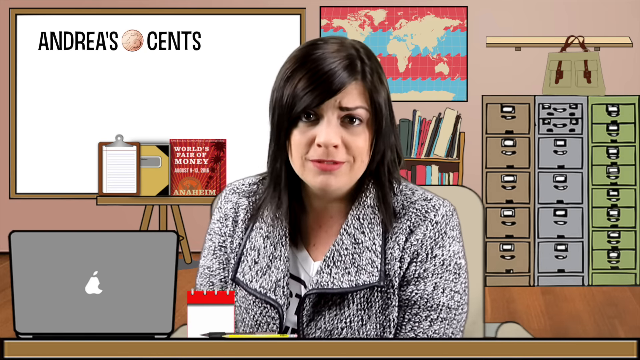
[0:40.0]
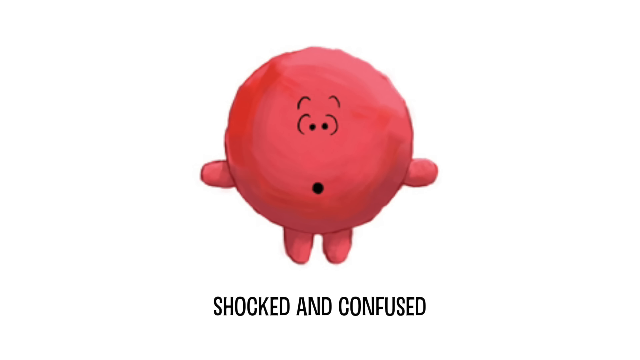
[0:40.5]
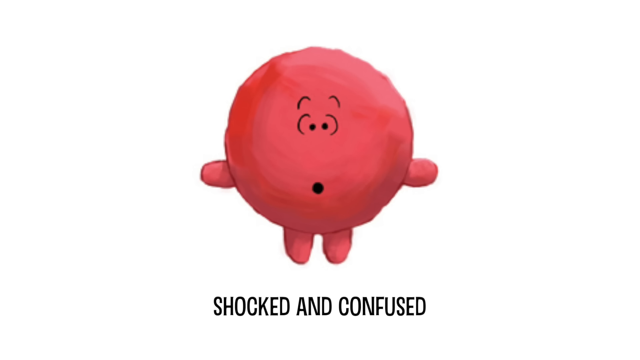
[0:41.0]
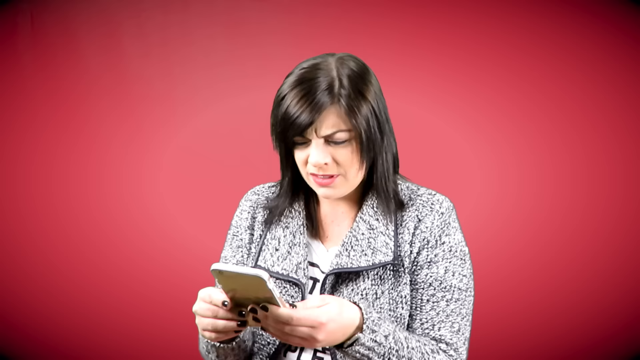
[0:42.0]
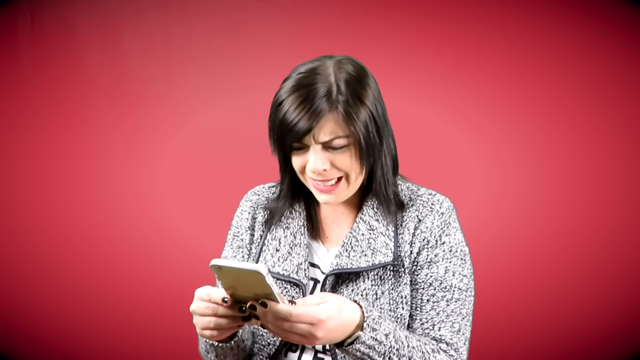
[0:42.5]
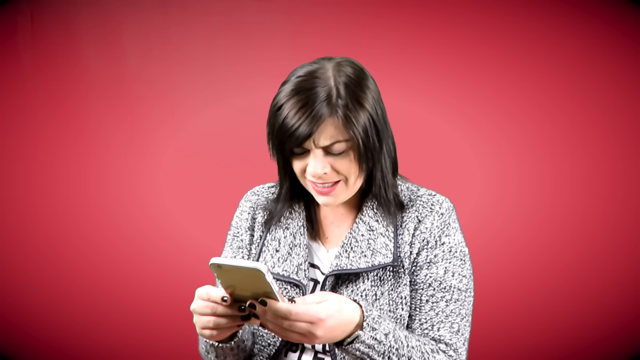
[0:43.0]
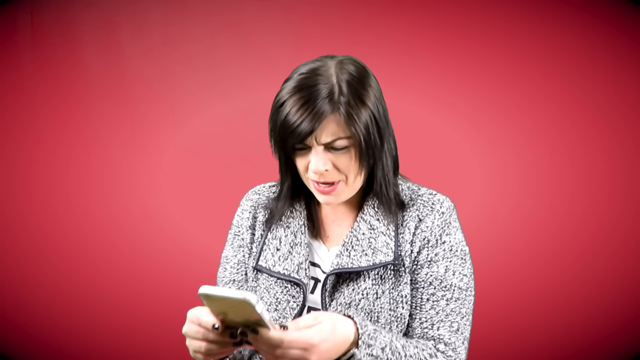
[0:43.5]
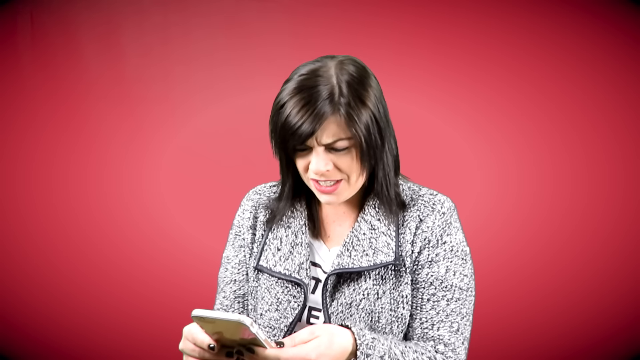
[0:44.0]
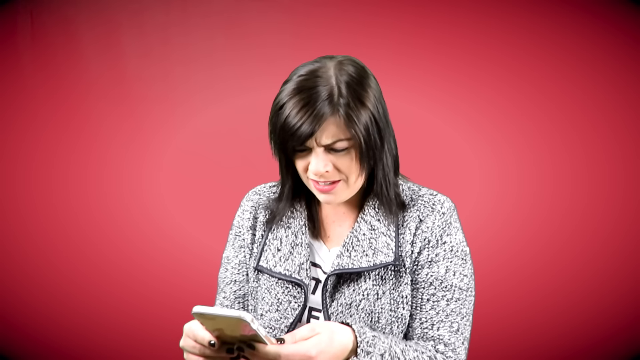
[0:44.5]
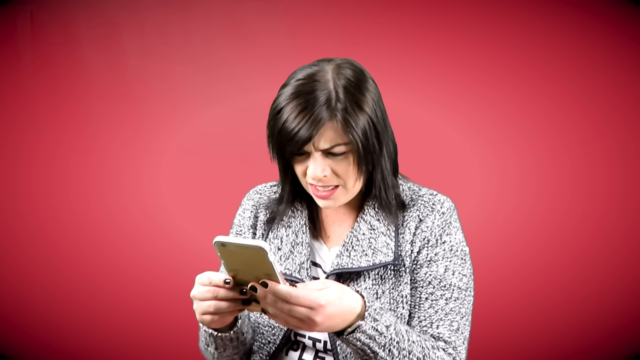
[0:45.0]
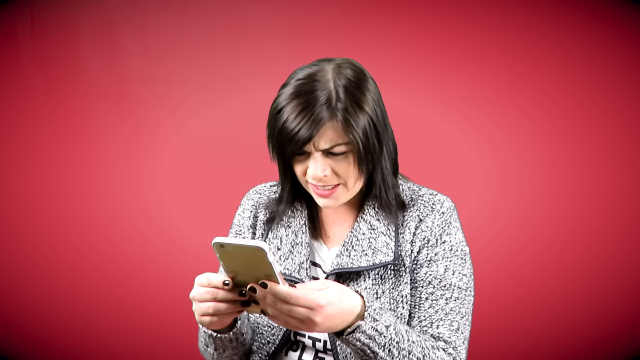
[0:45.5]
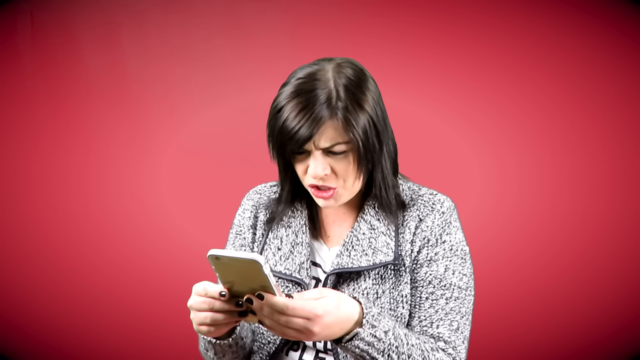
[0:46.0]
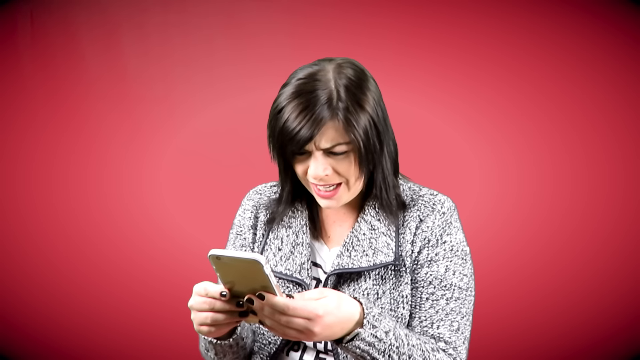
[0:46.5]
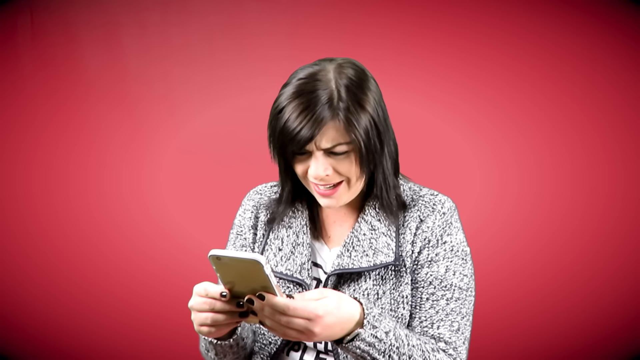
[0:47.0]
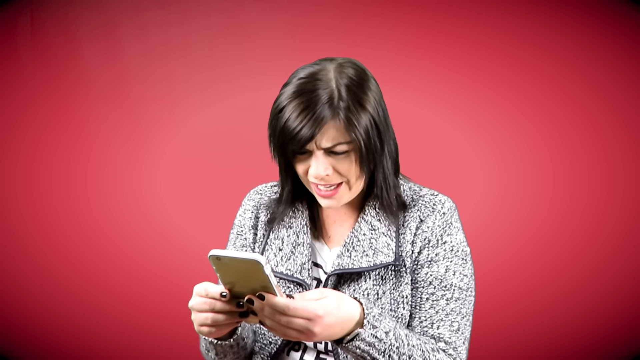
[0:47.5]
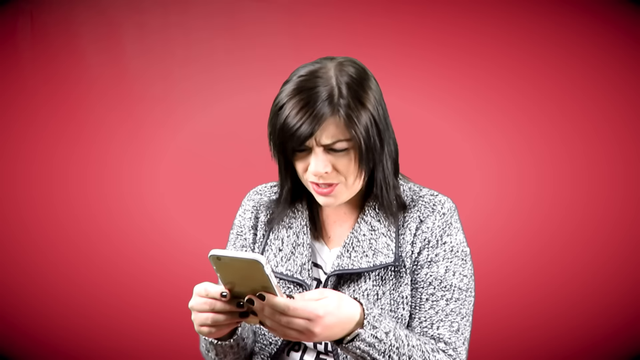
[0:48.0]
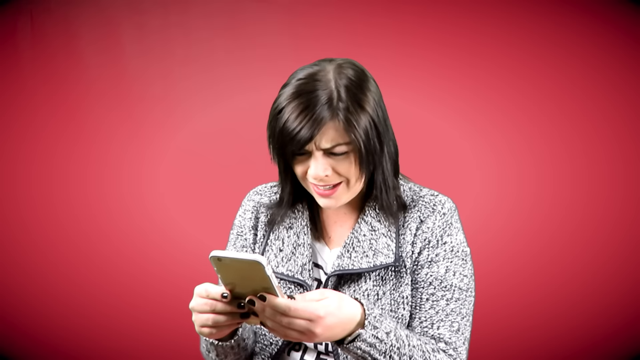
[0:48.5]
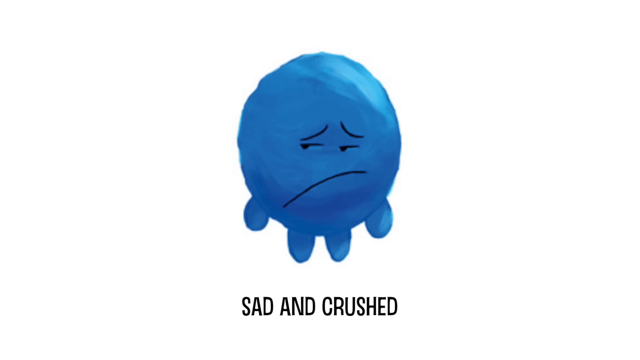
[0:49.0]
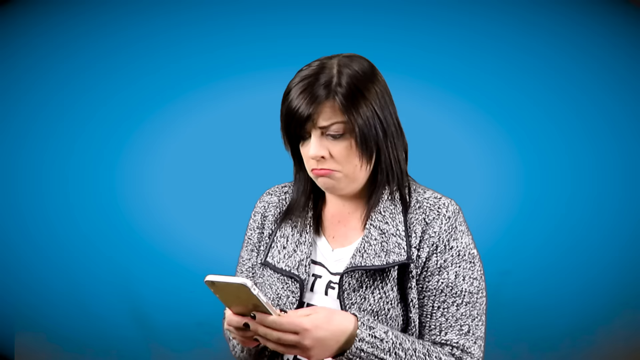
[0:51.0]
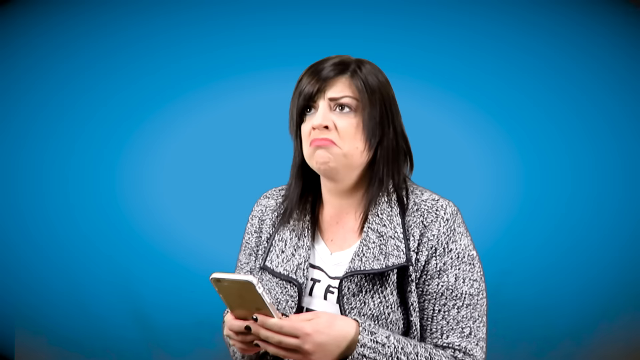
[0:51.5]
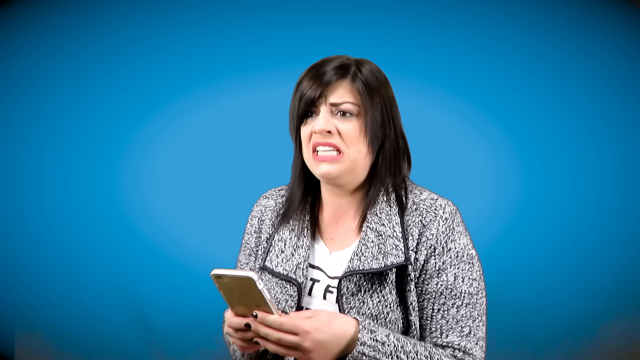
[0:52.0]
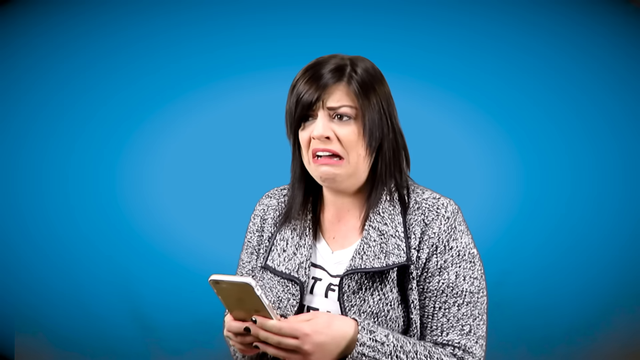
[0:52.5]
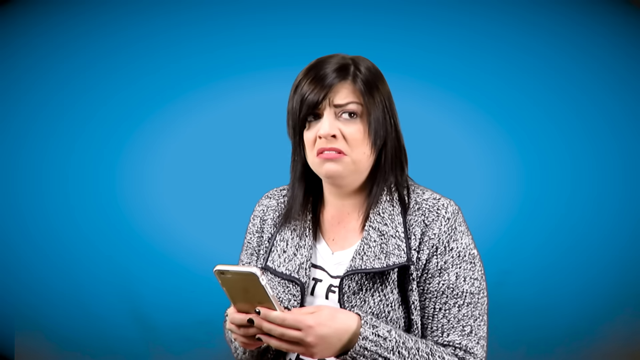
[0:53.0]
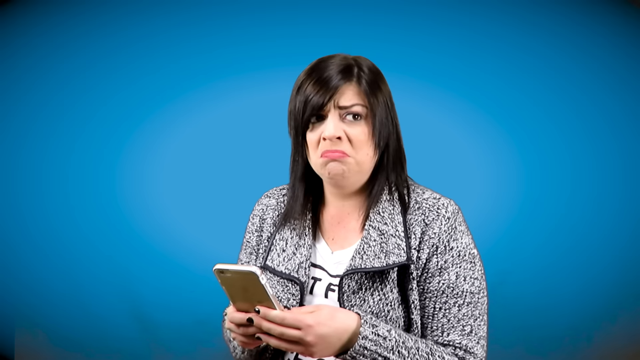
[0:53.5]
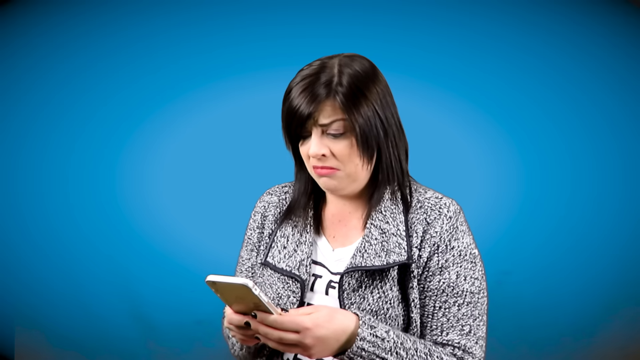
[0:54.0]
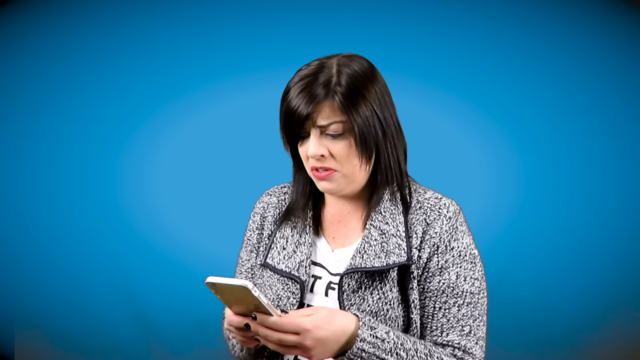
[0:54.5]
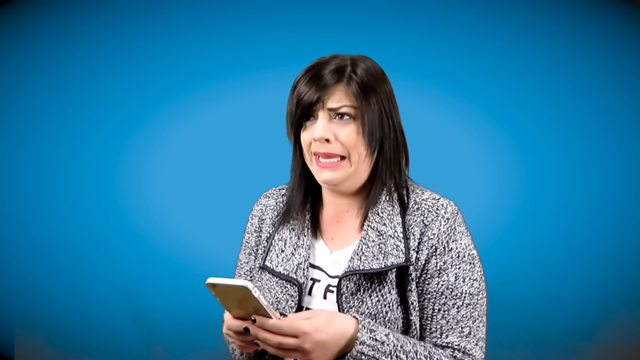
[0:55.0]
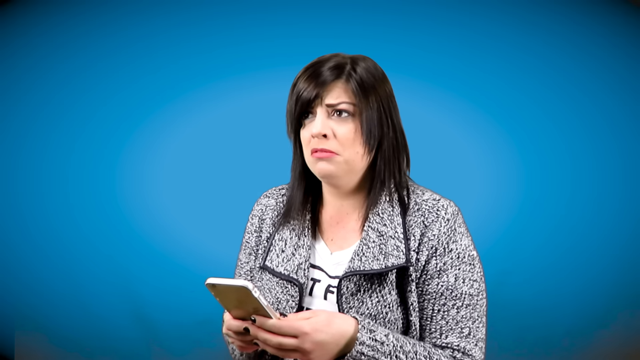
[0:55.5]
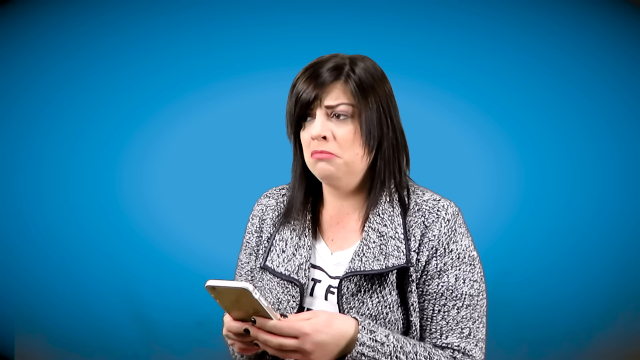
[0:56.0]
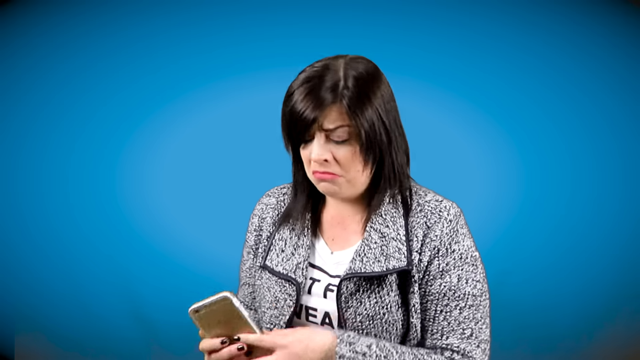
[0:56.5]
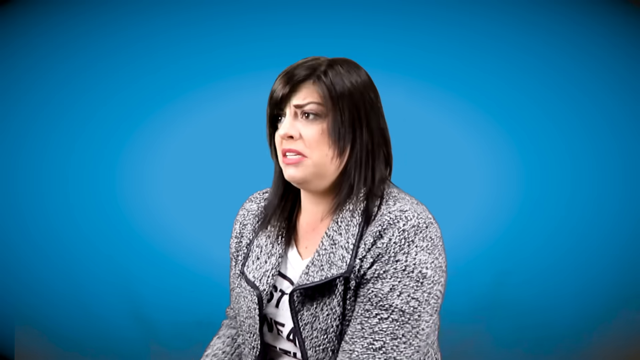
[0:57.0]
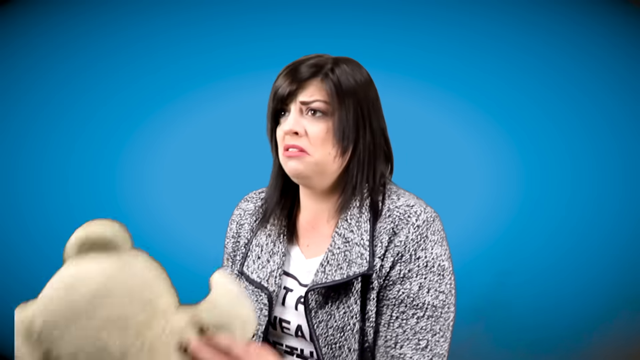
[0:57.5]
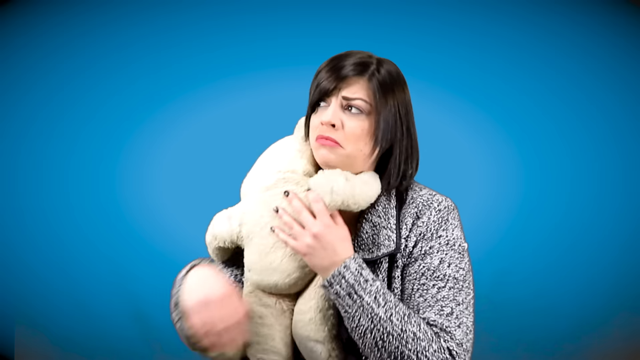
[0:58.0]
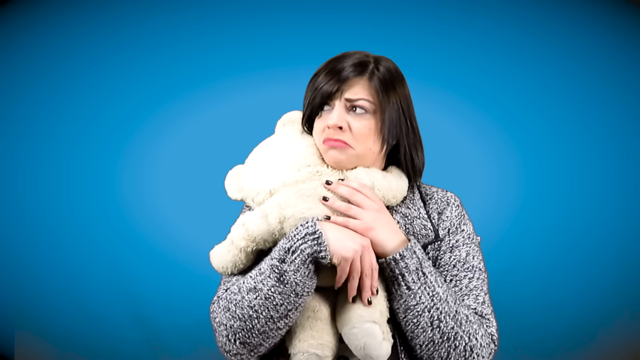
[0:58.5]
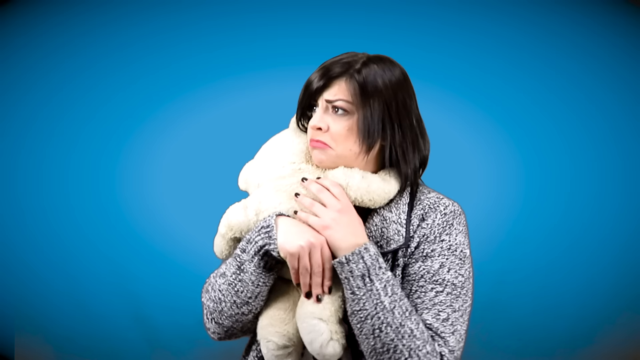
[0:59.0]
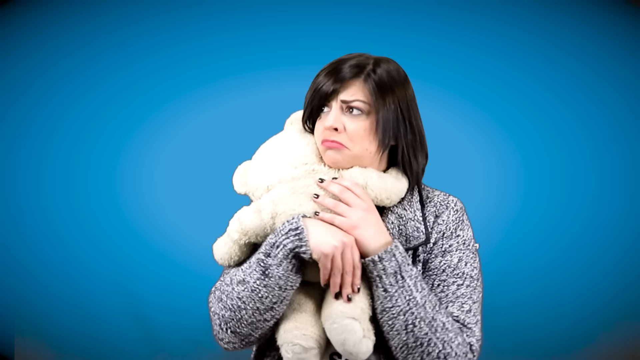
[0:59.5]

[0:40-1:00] An animated pink figure with a round head appears. It has two eyes, a hole punch for a mouth, two tiny horizontal hands and two tiny vertical legs. At the bottom, text says "shocked and confused." Andrea appears against a maroon background, still holding her cell phone, talking while bringing the phone closer to her face, probably to read what is on it. Another animated emoji is shown, the same as the pink one but blue, with "sad and crushed" at the bottom. Andrea's facial expression turns from happy to sad, and she picks up a white stuffed teddy bear and hugs it to her chest.